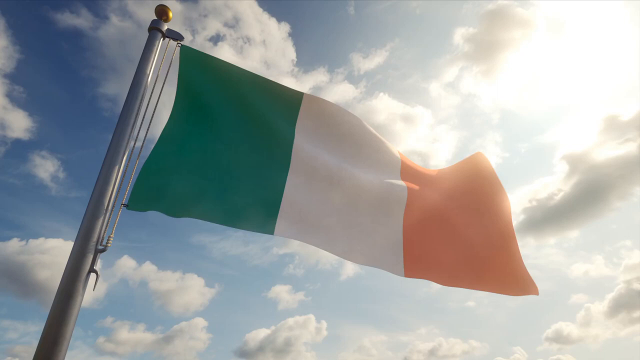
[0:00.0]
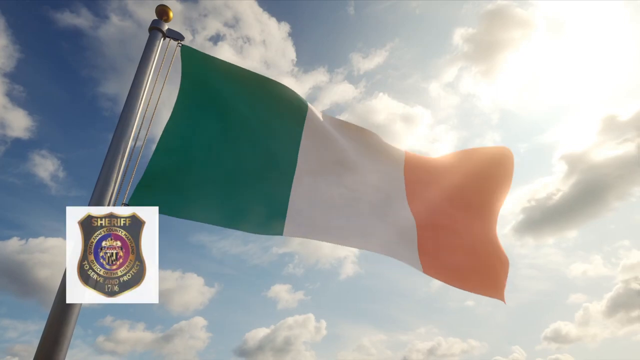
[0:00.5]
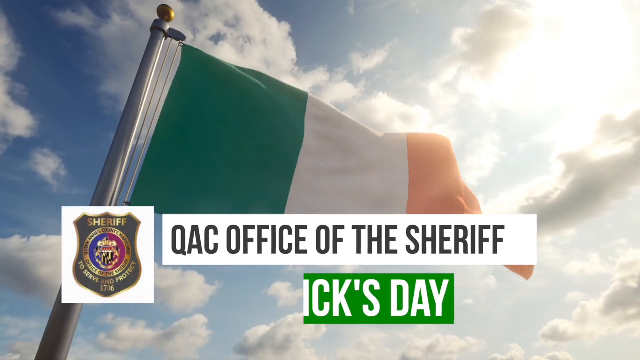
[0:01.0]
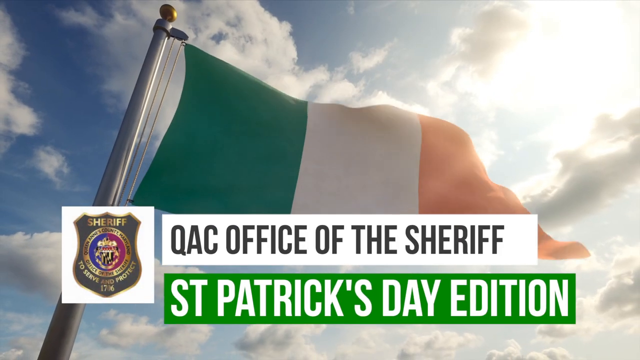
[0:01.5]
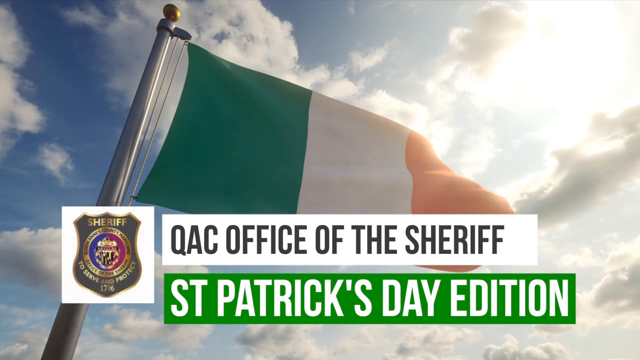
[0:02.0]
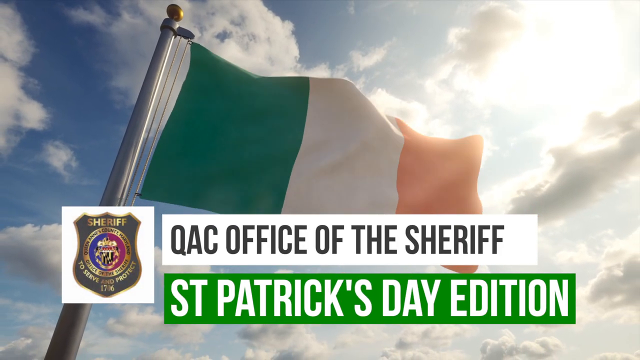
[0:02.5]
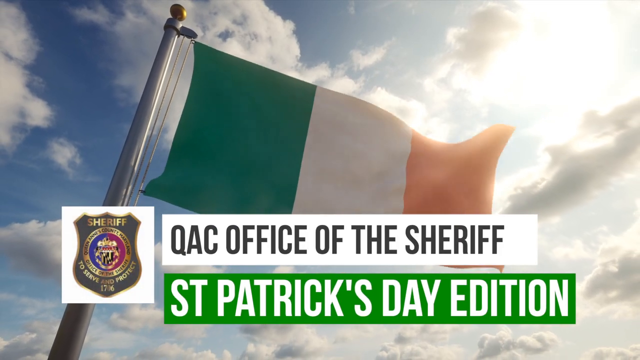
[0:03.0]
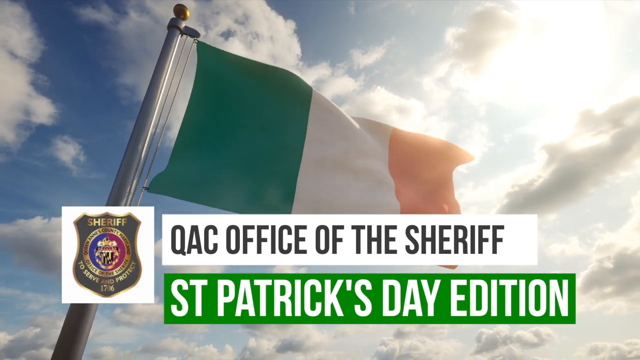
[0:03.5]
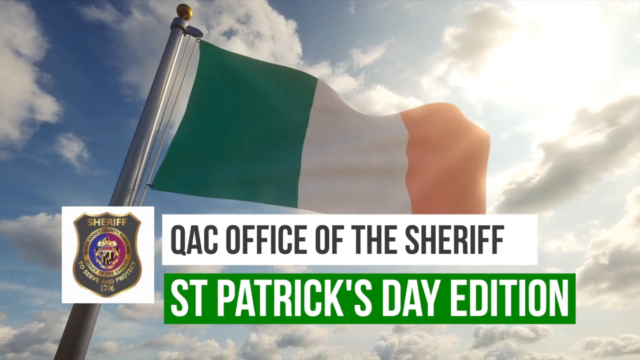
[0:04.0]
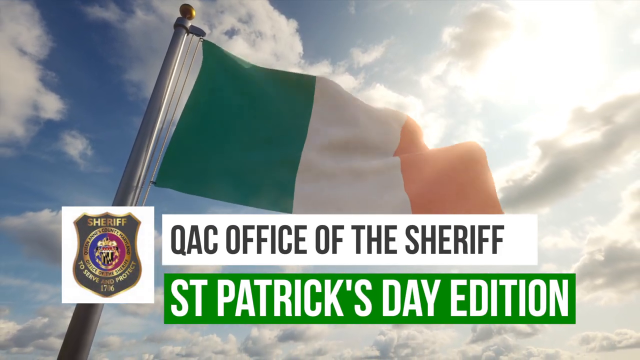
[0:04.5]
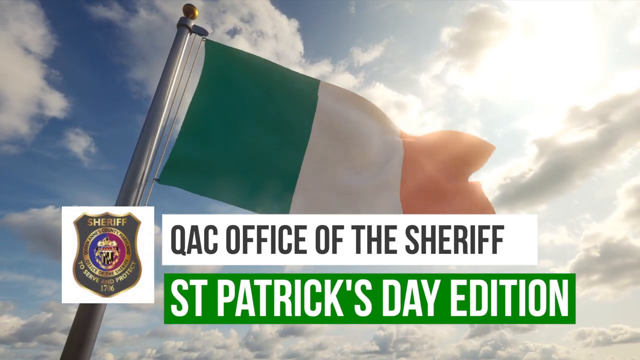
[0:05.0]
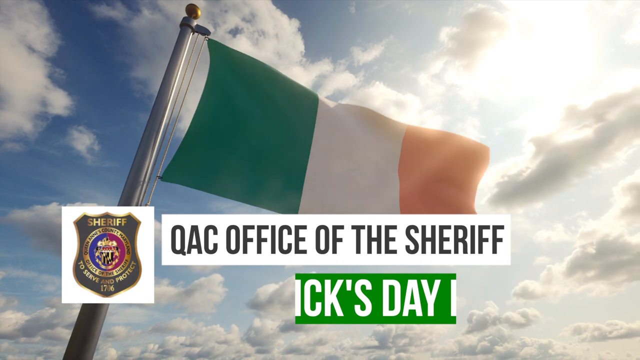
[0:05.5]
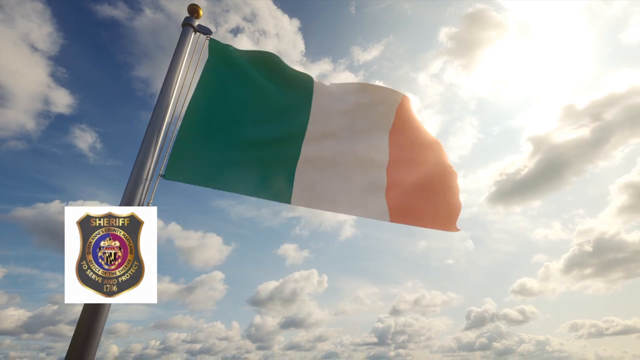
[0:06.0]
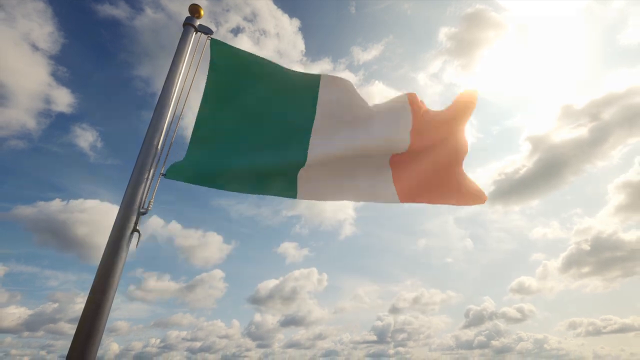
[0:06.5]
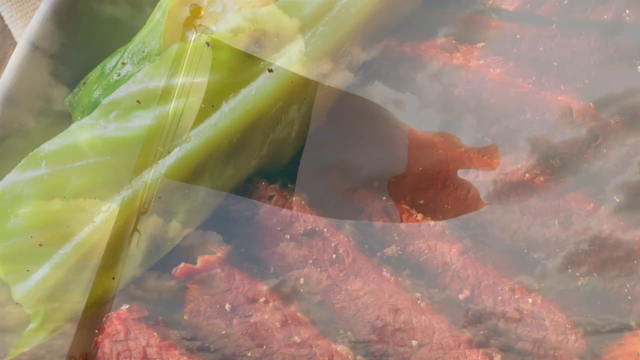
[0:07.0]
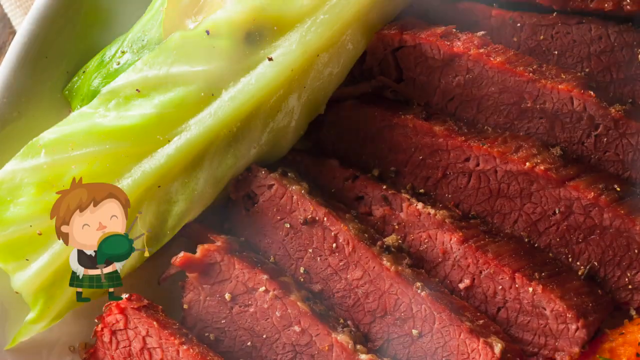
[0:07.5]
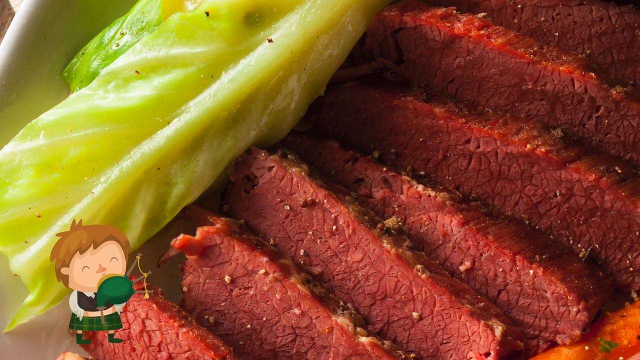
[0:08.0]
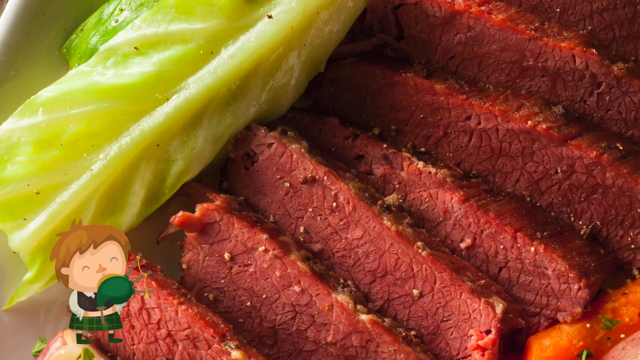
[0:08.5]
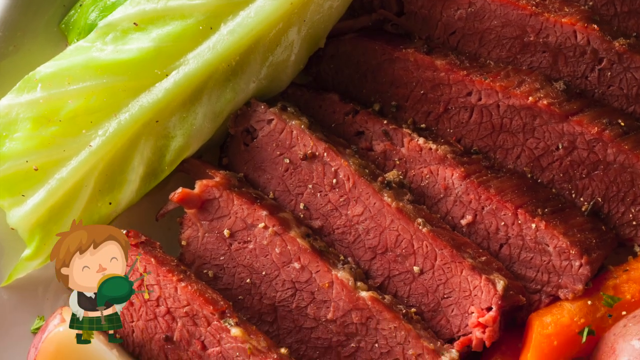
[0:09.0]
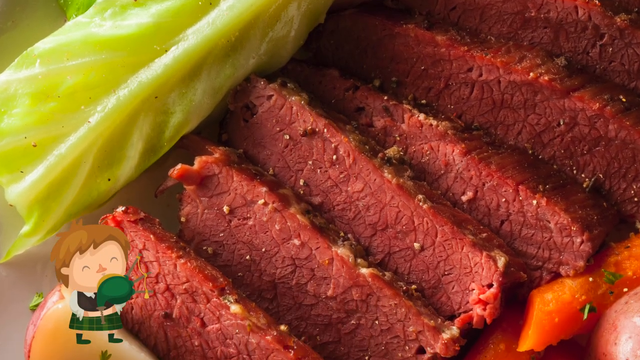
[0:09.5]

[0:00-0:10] A flag moves in the wind, its colours running green, white and orange from left to right, against a blue sky with many clouds. In the first seconds, some rectangular graphics appear at the bottom of the screen. The one on the left contains a sheriff's badge, while the two rectangular graphics in the lower center of the frame contain writing: the upper banner has black writing on a white background, and the lower one has white writing on a green background. Next, for a few seconds, a photo of food in a dish appears, with an illustration of a man in the lower left corner of the frame.